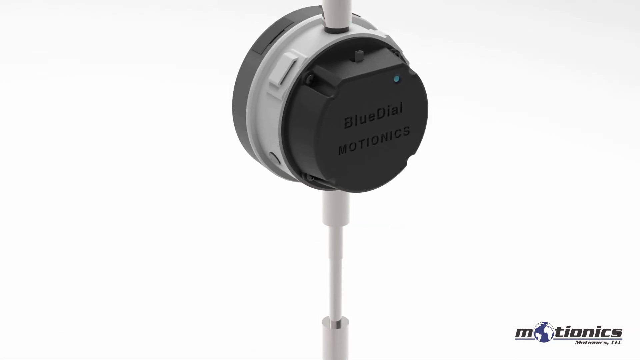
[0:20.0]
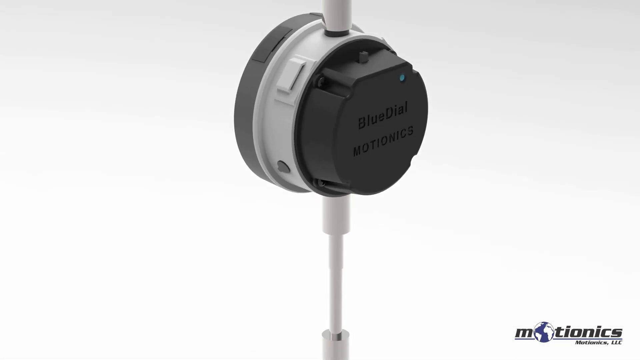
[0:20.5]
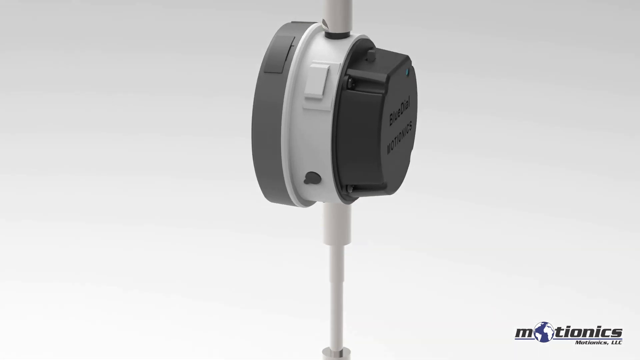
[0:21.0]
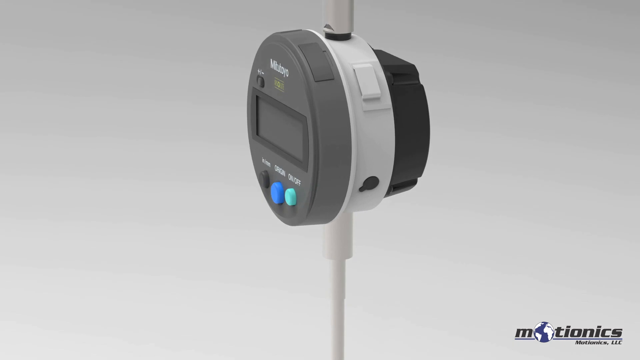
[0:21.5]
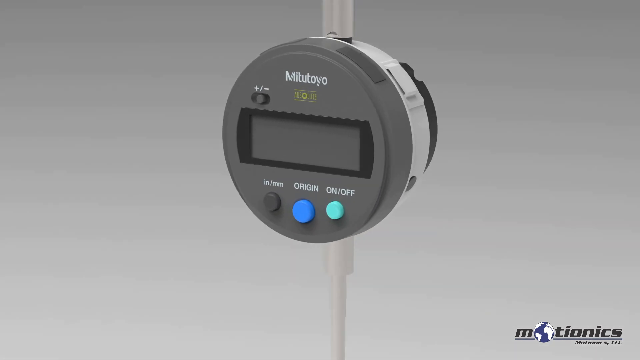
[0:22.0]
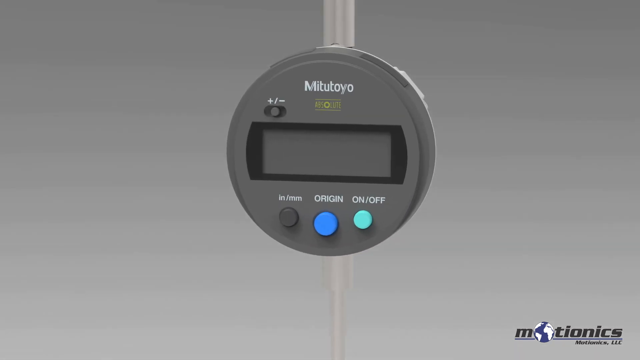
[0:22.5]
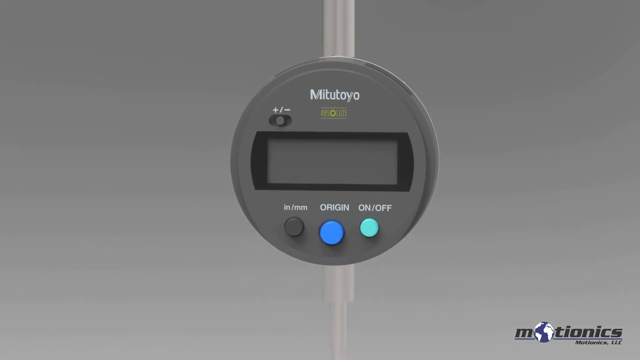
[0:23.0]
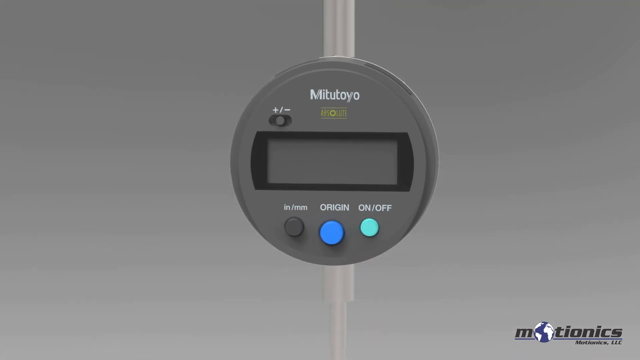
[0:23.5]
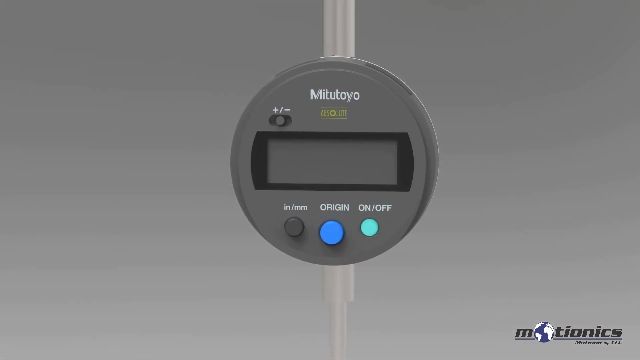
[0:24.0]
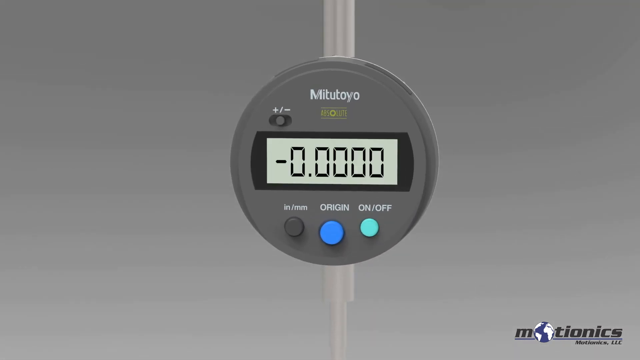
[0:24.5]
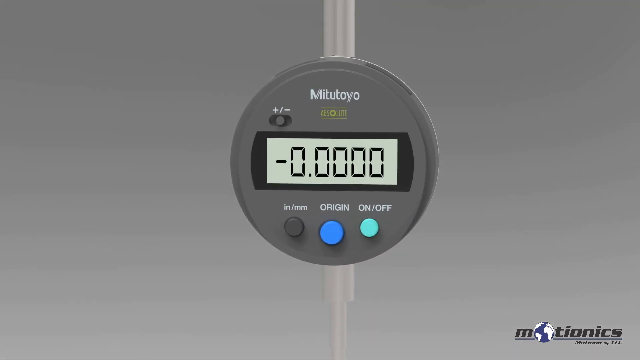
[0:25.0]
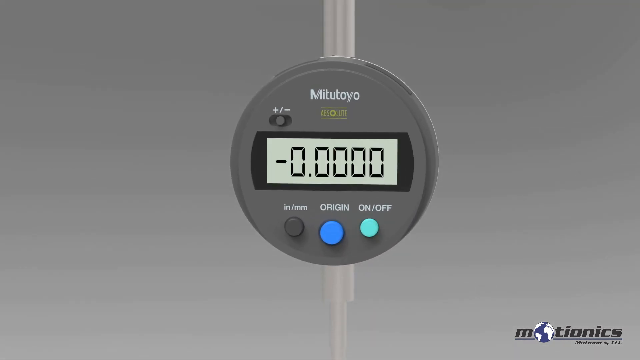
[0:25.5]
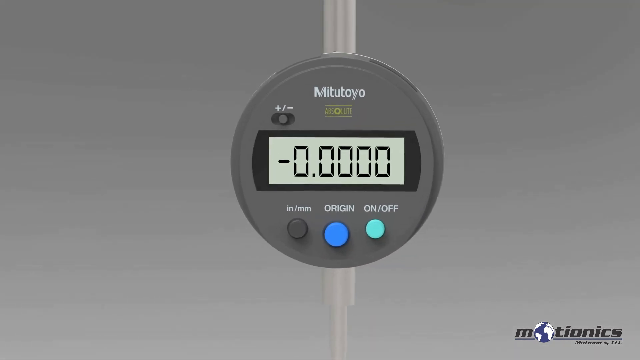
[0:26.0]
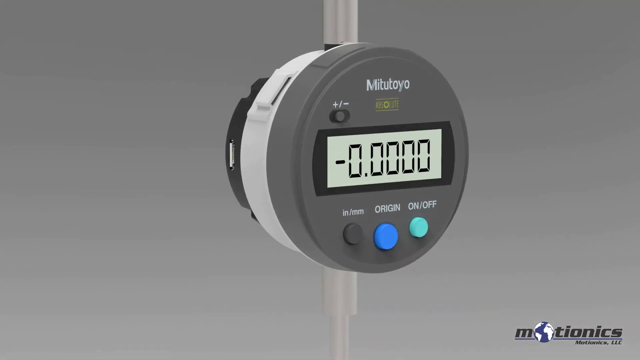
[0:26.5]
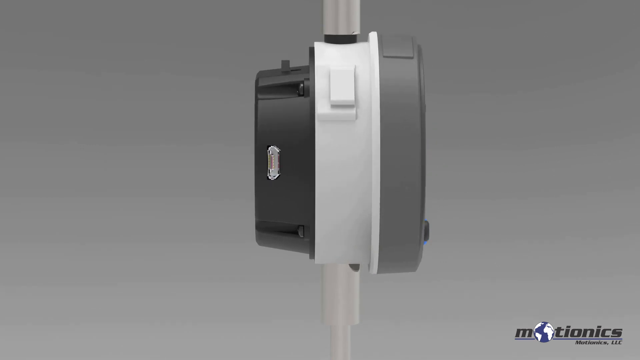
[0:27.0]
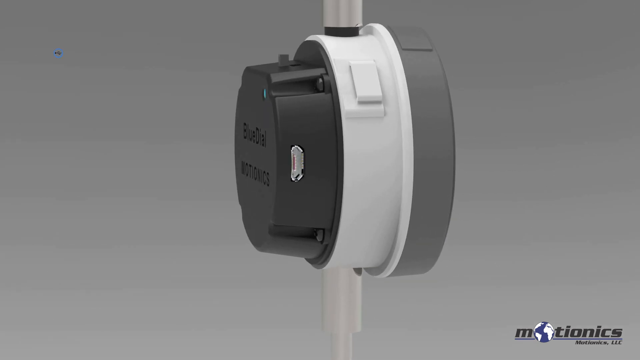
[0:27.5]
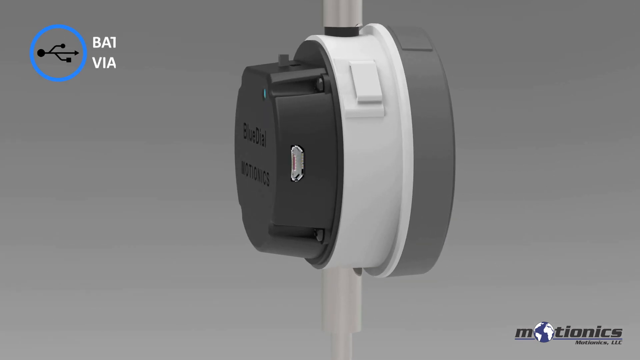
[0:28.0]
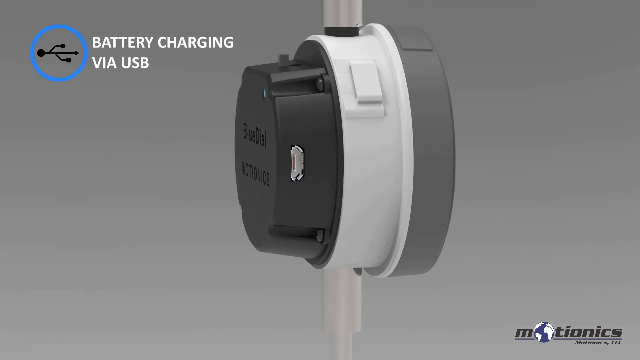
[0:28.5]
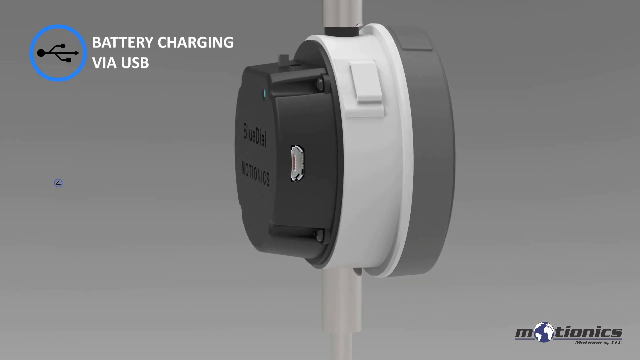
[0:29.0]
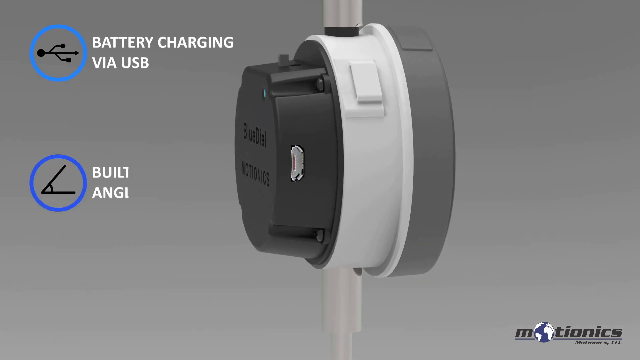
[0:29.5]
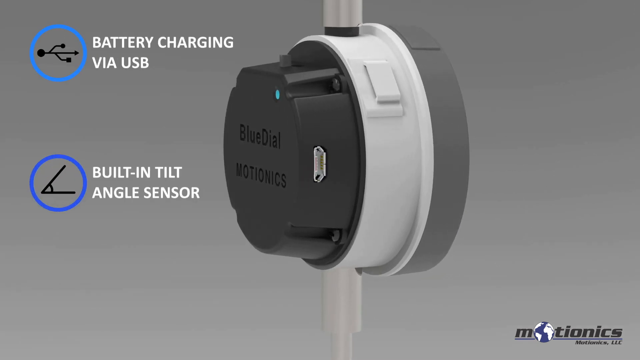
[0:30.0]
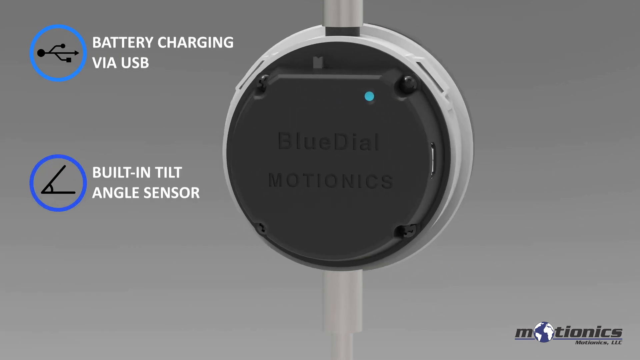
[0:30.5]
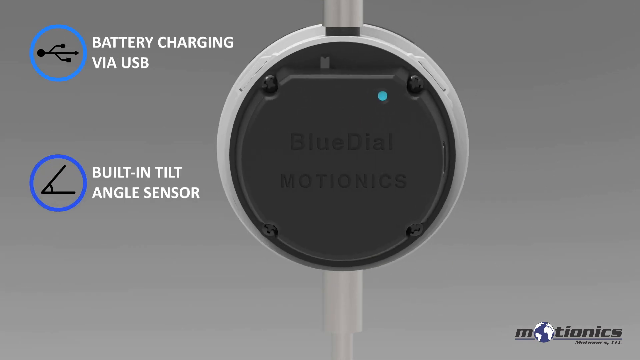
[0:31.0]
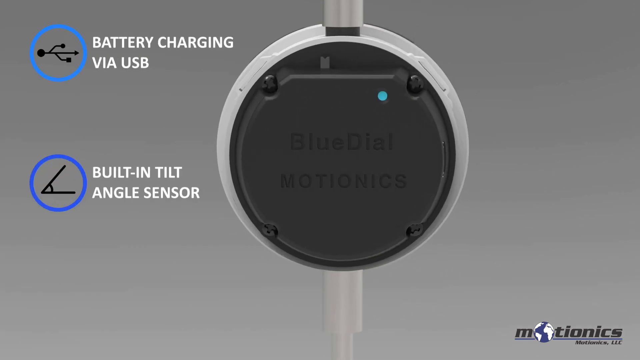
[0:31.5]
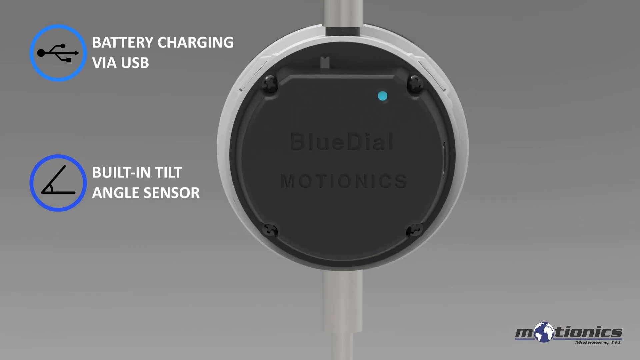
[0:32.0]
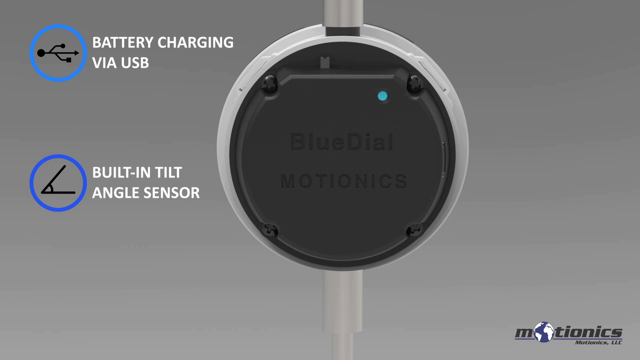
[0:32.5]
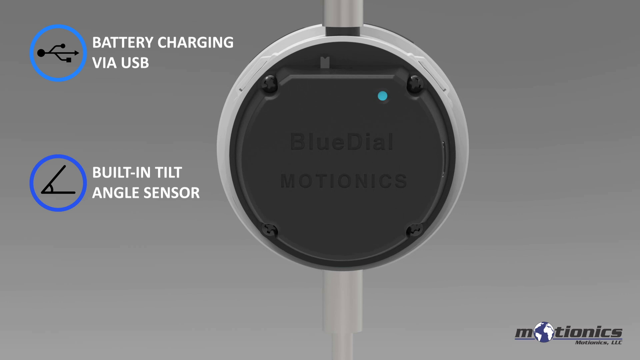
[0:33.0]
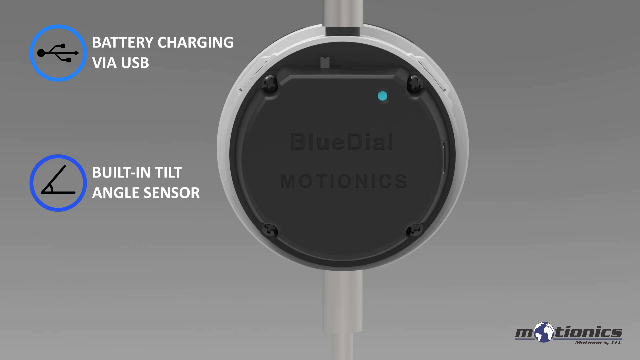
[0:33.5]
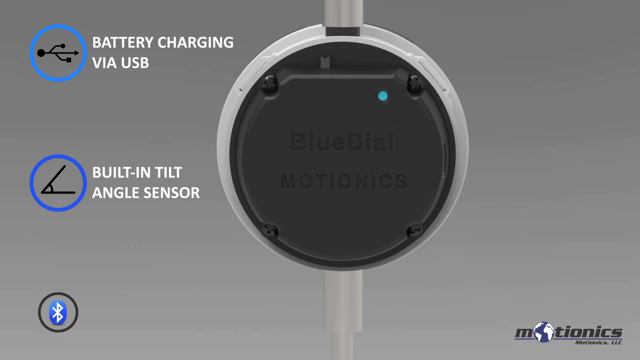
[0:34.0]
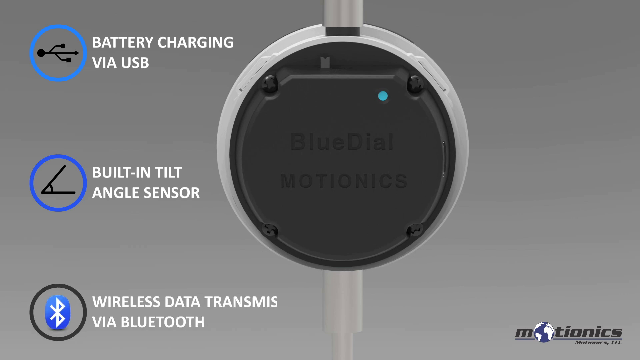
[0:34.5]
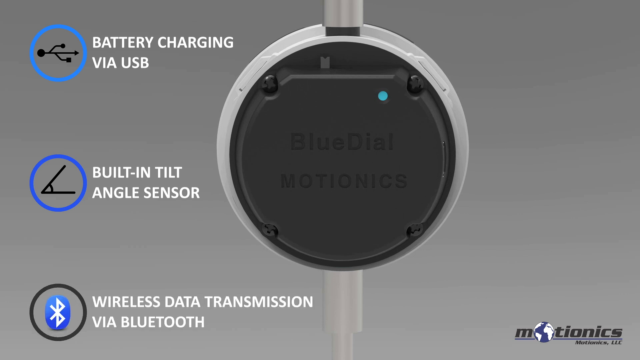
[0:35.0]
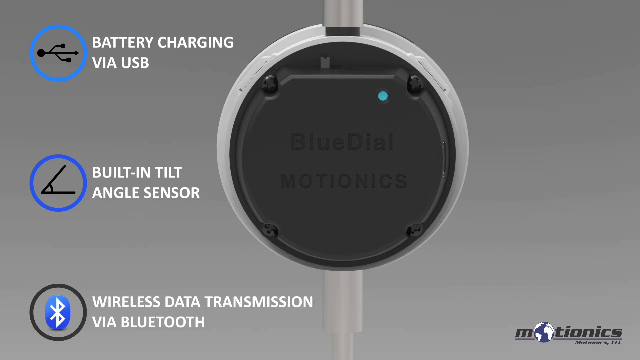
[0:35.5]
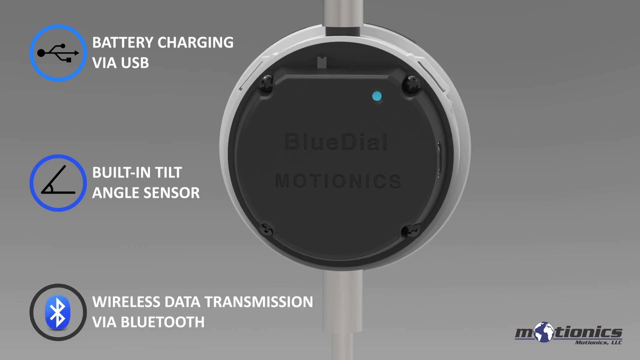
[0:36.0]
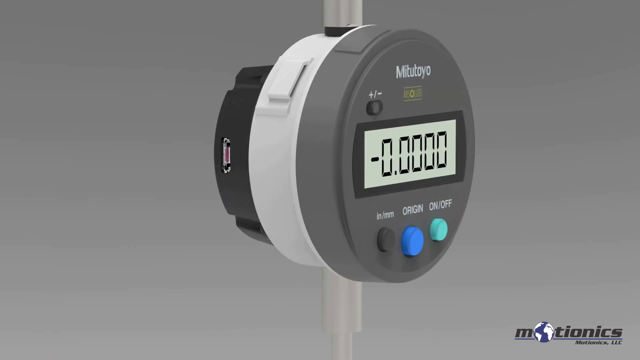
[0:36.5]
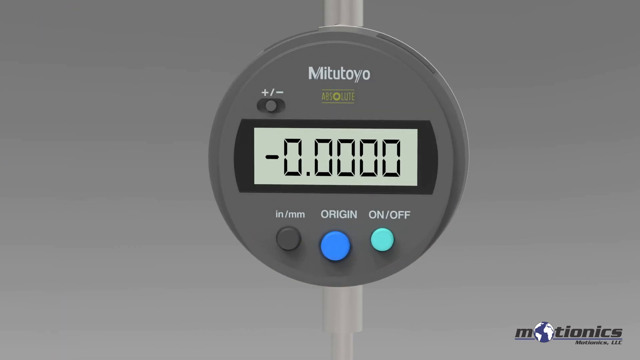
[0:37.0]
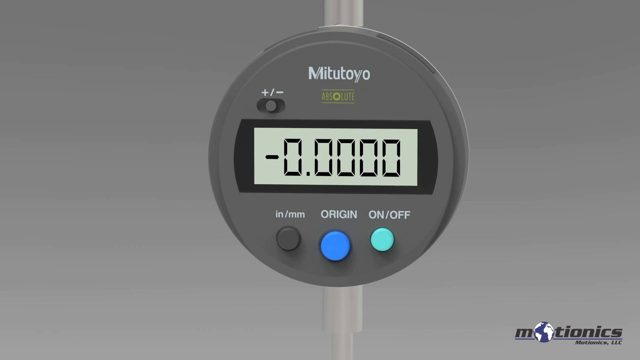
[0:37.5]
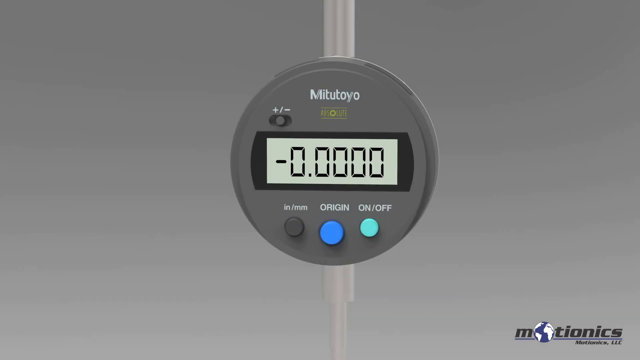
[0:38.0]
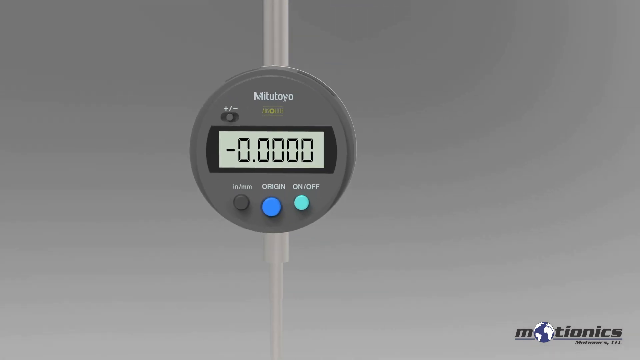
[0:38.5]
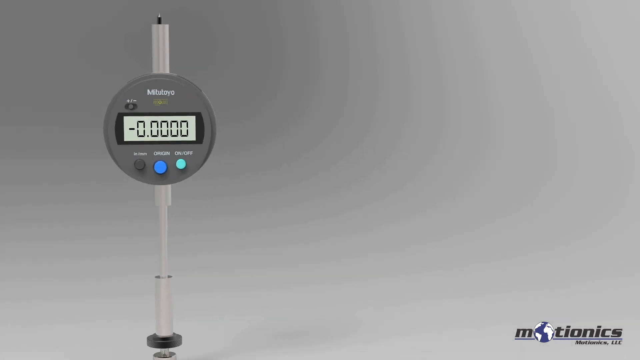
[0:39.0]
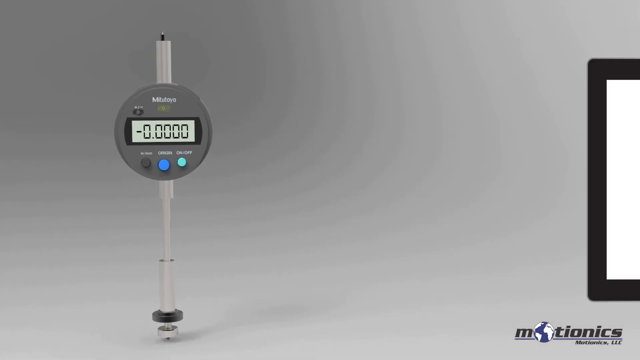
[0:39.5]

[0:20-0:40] The electronic device spins right to left back to the front. At the bottom of the screen appears "motionics" with a globe as the O. The device's screen becomes bright and reads "-0.0000". The device spins right to left again, revealing on its back a place to plug in a USB cable. At the top of the screen a blue circle appears with a logo showing that it can be plugged in, along with the text "battery charging via USB". Another dark blue circle appears with an angle marker, a sideways V with a line in between, and the text "built-in tilt angle sensor". The device spins until its back faces forward; at its top right what looks like a teal LED is on. At the bottom left of the screen a black circle appears with a Bluetooth logo inside, and white text reads "Wireless Data Transmission via Bluetooth". The device spins right to left to face forward again, and the other text disappears. The camera zooms out so the device is on the left side of the screen, and a tablet slides in and stops on the right side.